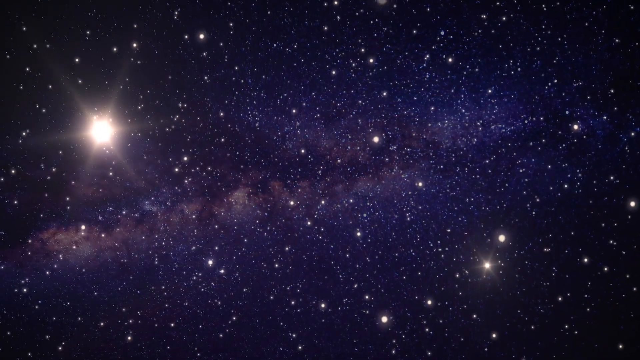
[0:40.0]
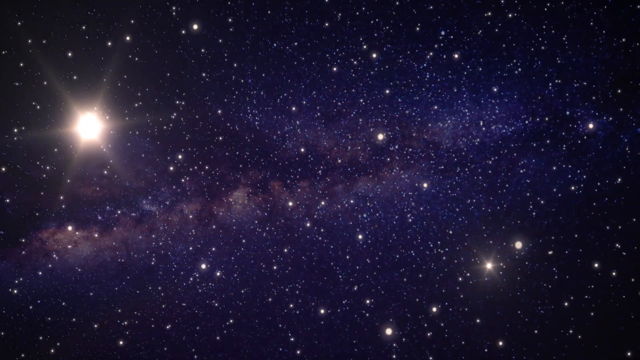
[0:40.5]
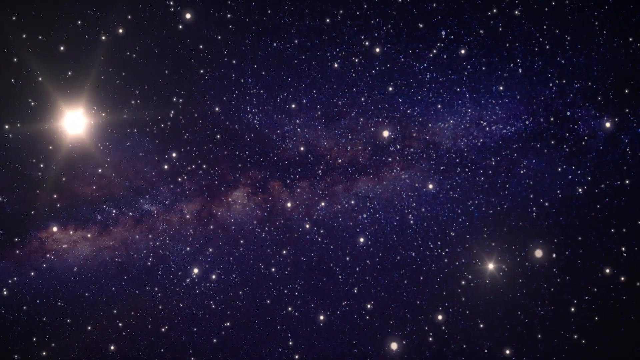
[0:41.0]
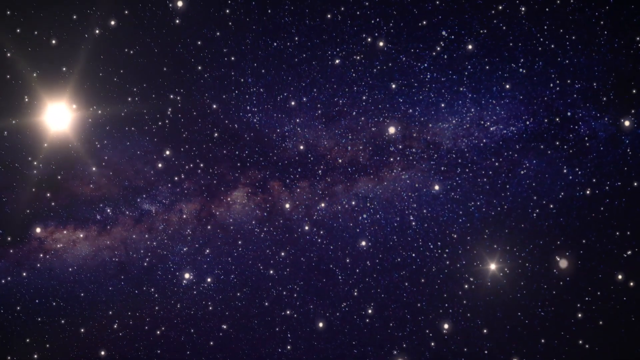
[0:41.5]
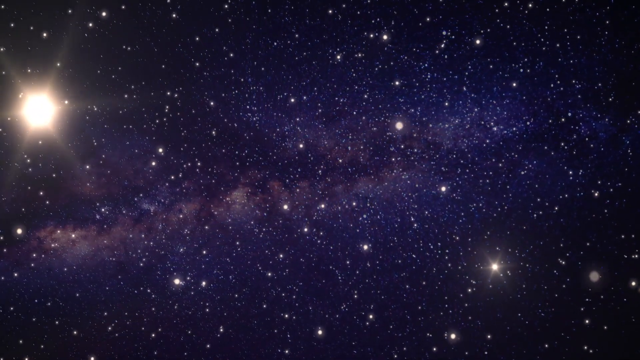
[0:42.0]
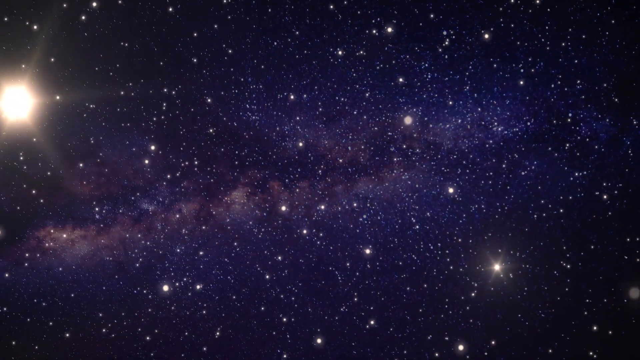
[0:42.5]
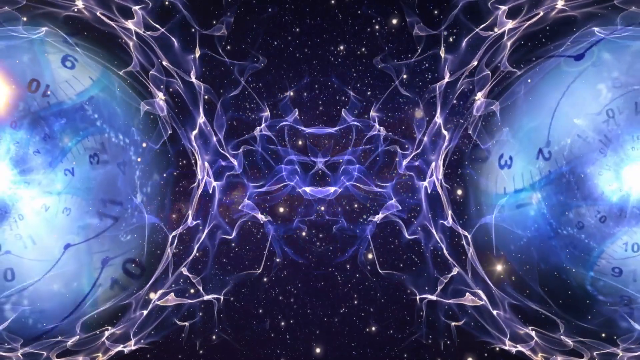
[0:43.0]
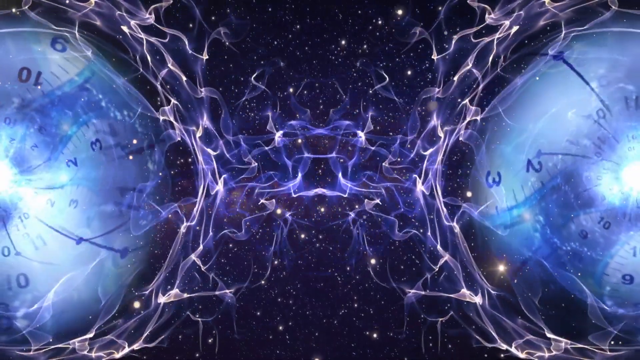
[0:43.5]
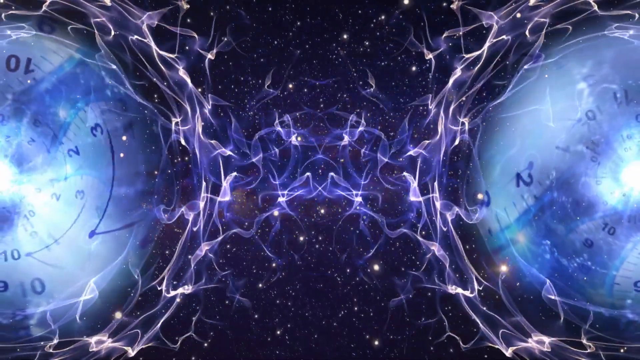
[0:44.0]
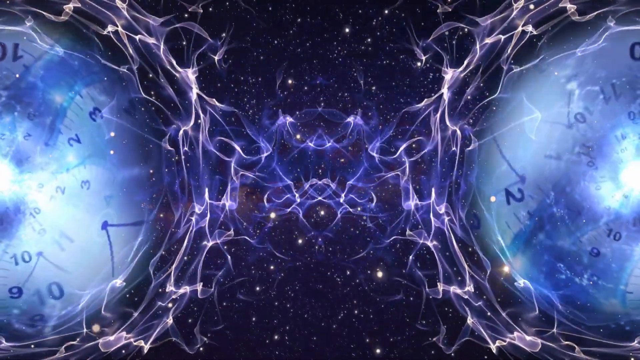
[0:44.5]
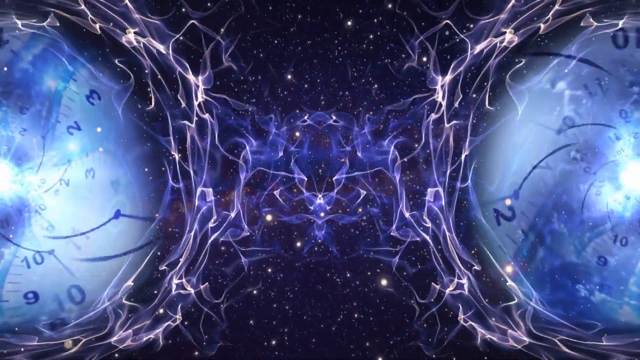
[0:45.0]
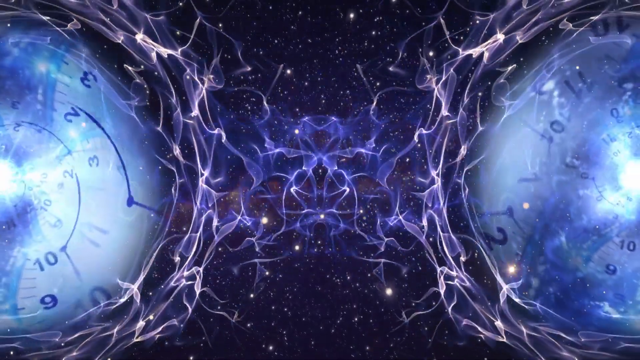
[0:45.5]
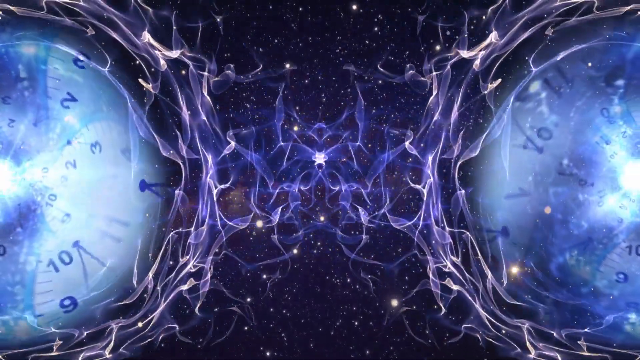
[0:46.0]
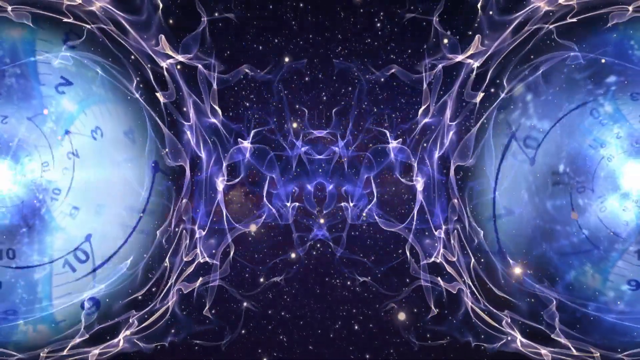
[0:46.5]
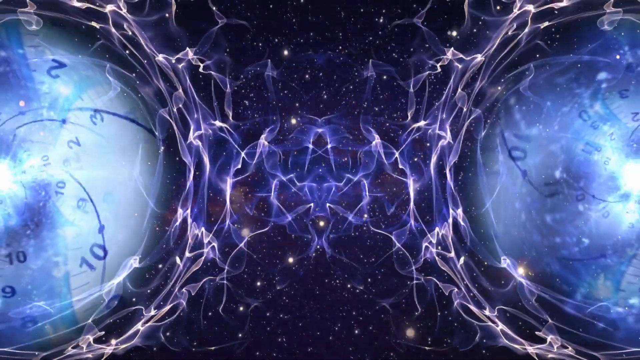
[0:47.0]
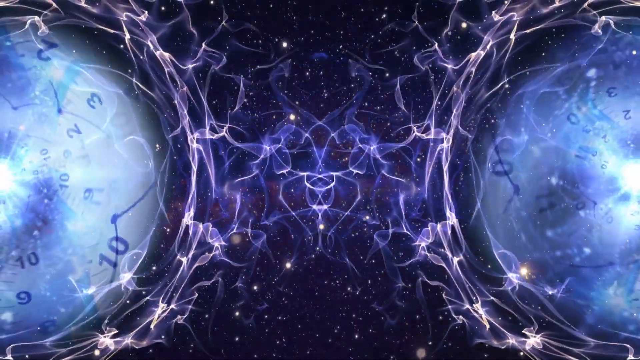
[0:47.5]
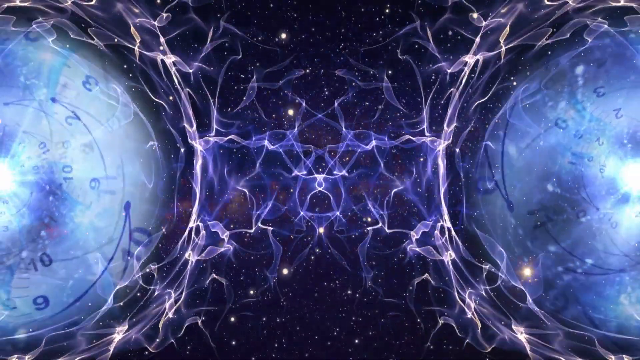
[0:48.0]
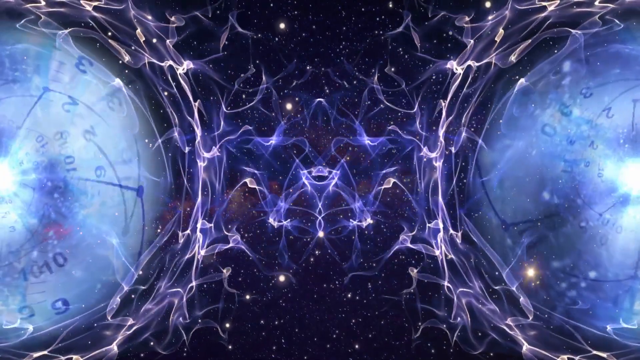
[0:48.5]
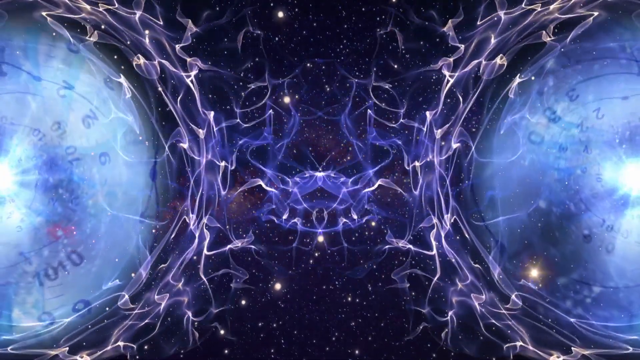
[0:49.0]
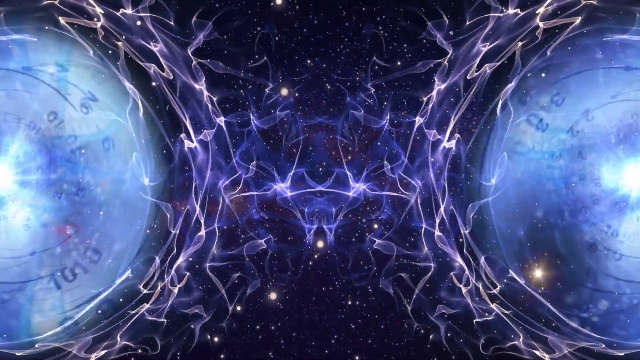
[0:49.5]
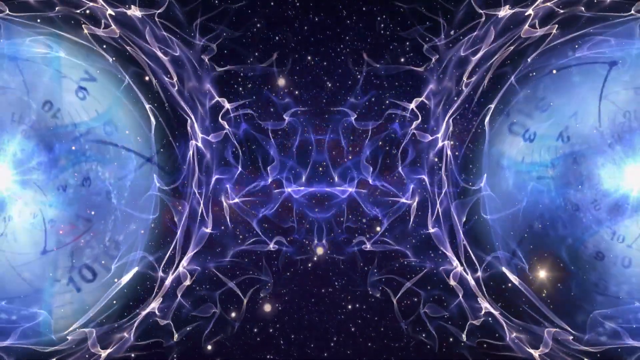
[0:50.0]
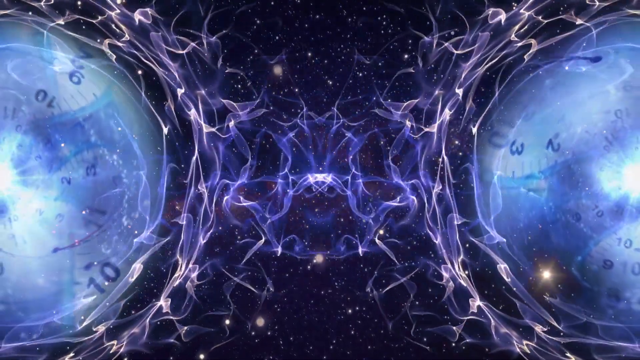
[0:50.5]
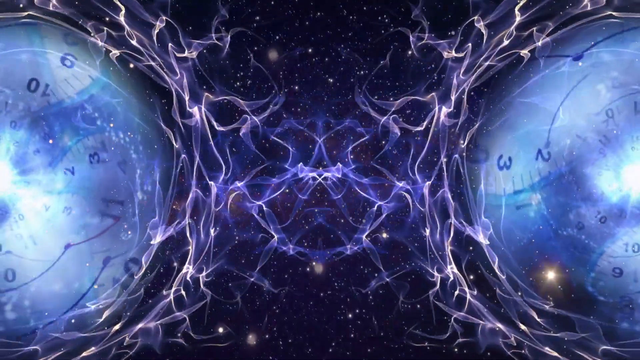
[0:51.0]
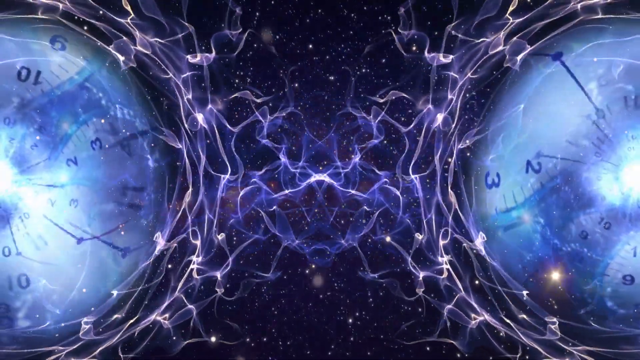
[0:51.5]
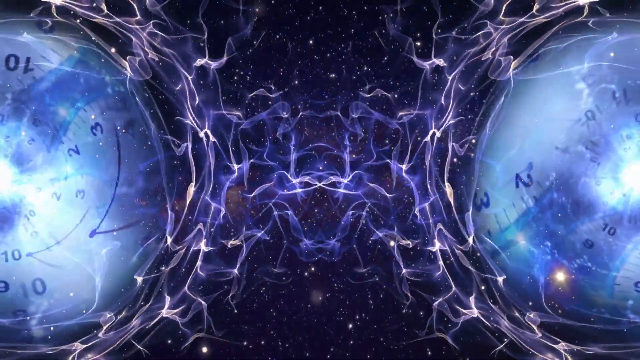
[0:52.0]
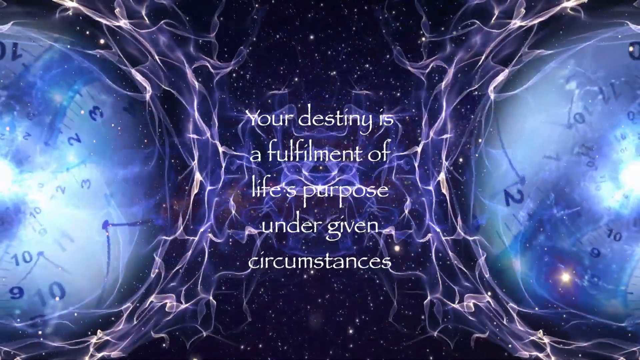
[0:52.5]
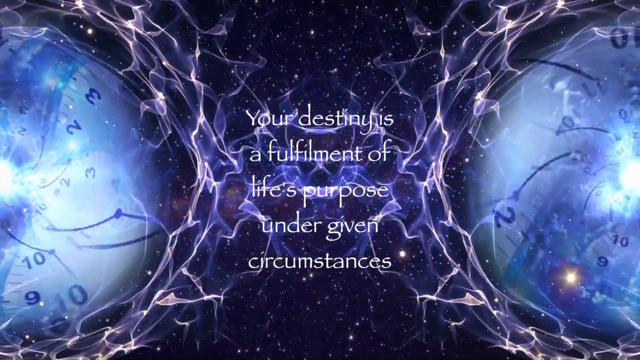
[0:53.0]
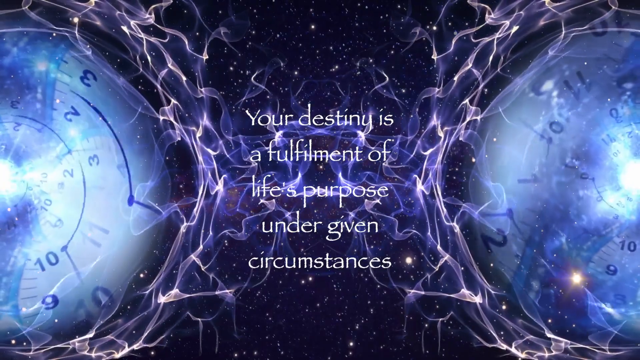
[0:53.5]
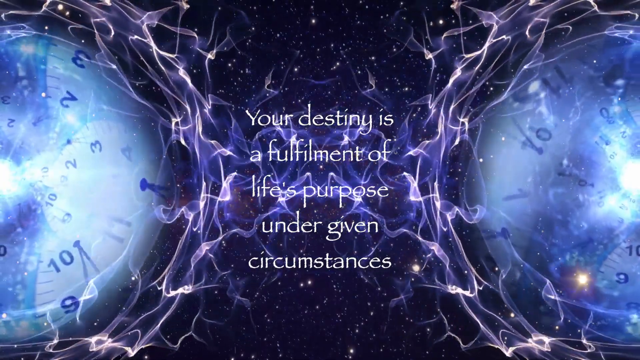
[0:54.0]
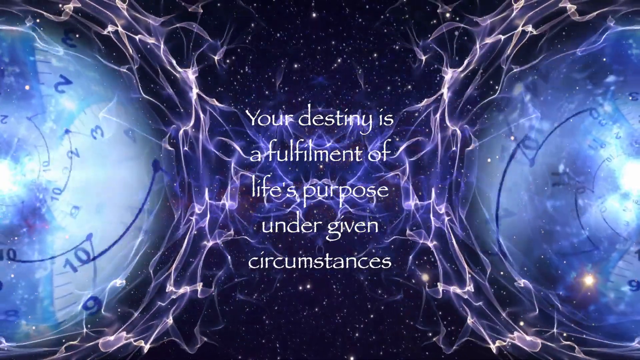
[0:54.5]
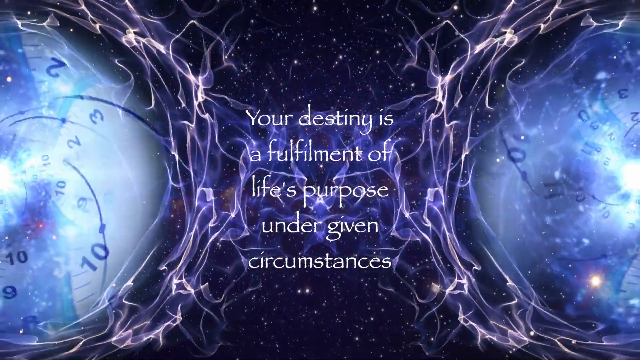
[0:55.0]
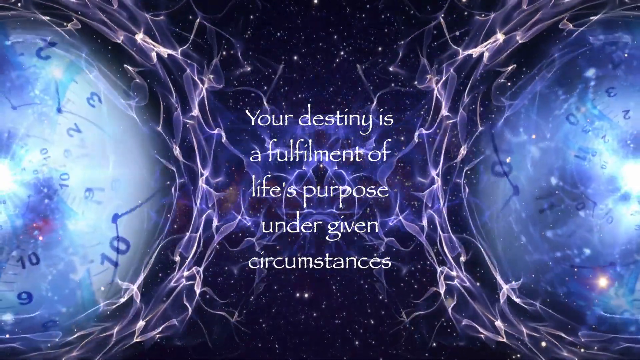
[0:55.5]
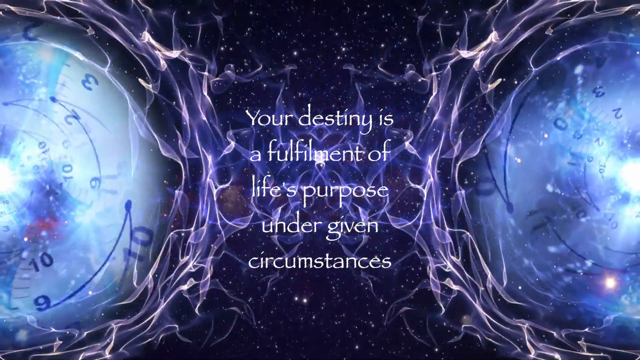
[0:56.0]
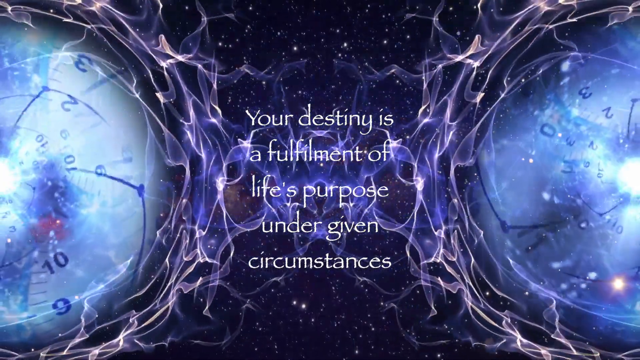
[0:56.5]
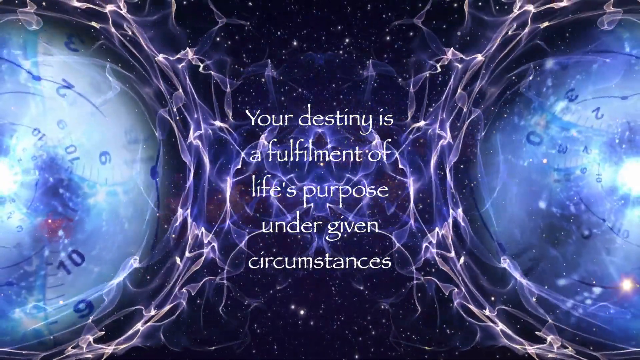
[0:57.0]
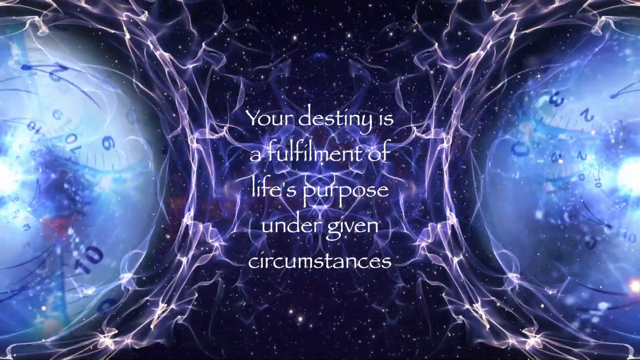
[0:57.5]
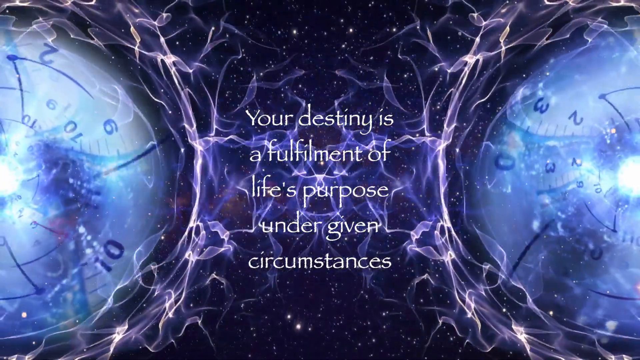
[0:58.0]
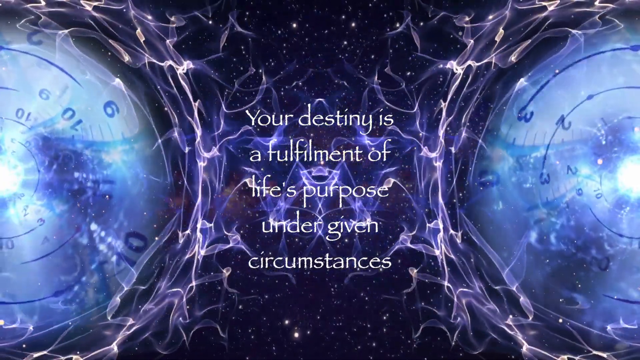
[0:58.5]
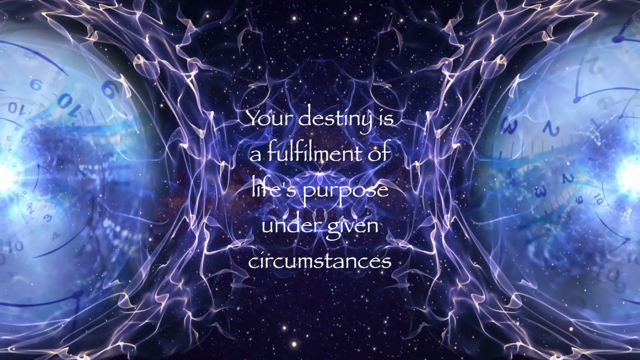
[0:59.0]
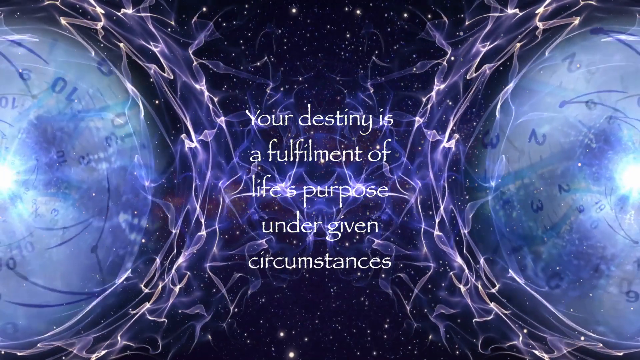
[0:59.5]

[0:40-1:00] A very starry visual shows stars moving slowly towards the camera. One star on the left side of the screen is noticeably bigger than all the others. Next, two white balls appear, both seemingly with many numbers inside. As the balls turn, the numbers turn too, and things like sparks come out of the balls and flow towards the center. Stars are still visible in the background. A message written in white appears on the screen: "Your destiny is a fulfillment of life's purpose under given circumstances." While the message is in the center of the screen, the balls with numbers inside are still moving around, and the sparks are still flowing towards the center where the message is.